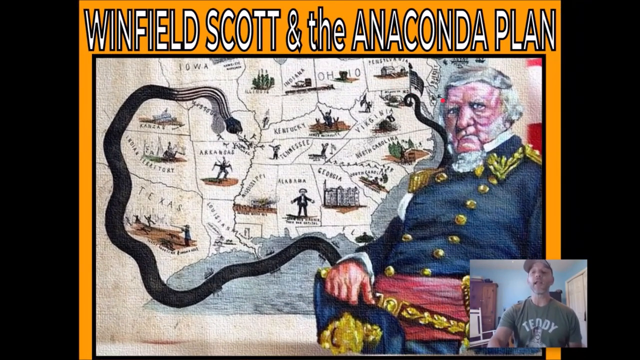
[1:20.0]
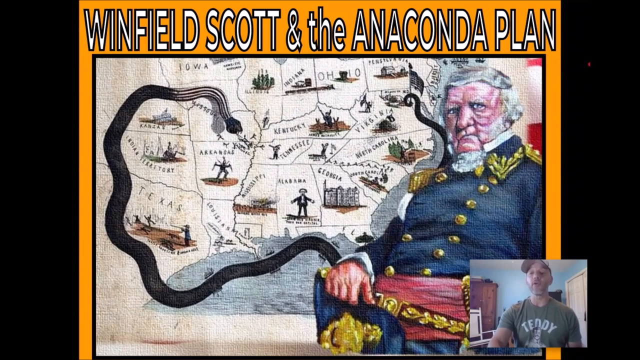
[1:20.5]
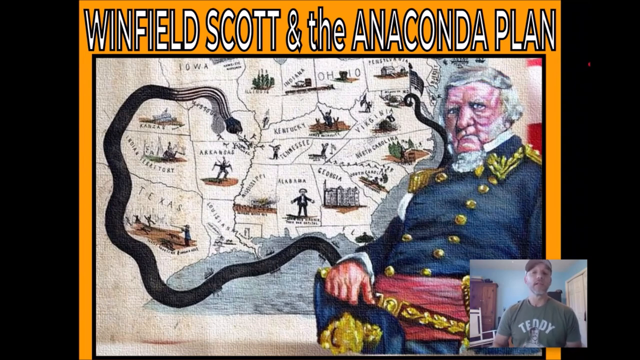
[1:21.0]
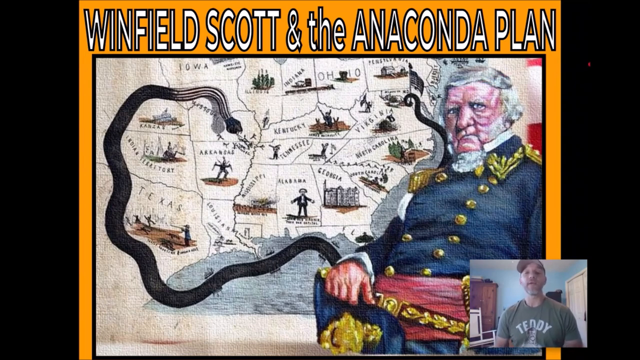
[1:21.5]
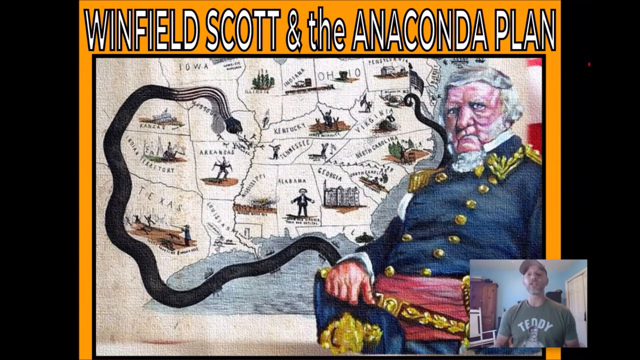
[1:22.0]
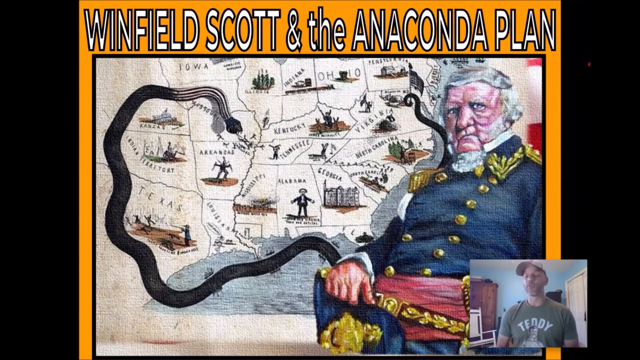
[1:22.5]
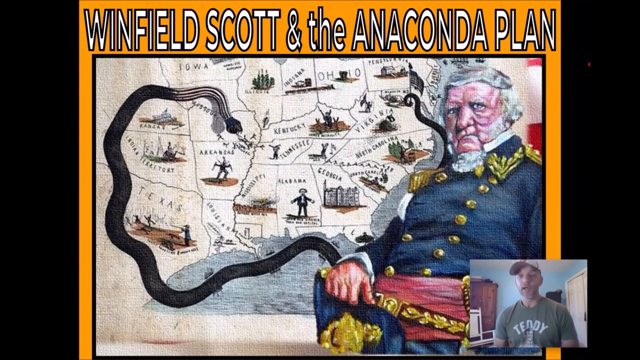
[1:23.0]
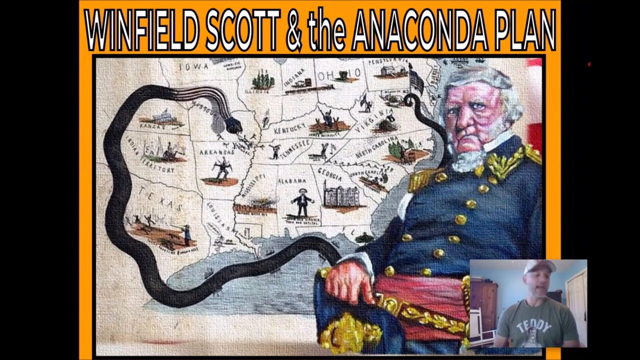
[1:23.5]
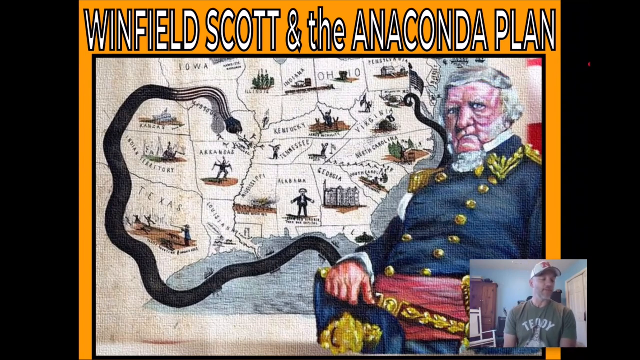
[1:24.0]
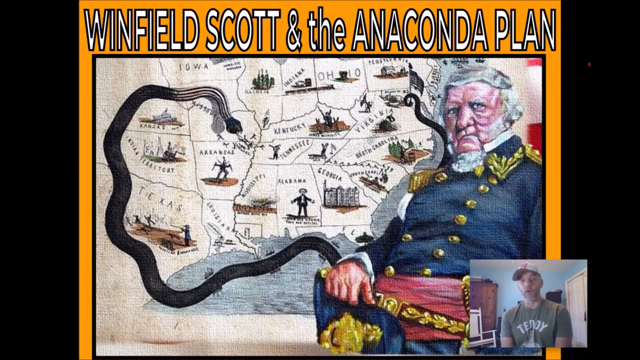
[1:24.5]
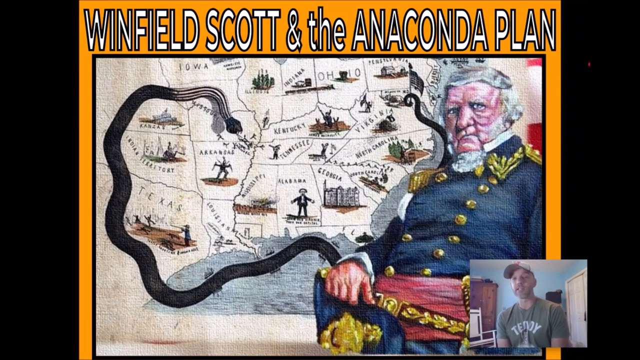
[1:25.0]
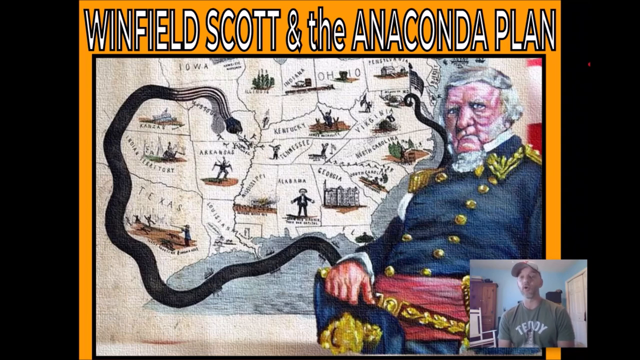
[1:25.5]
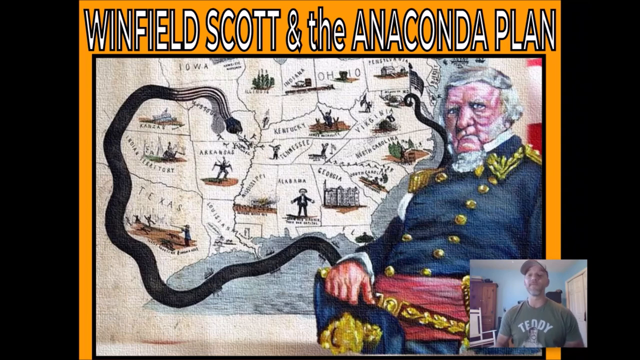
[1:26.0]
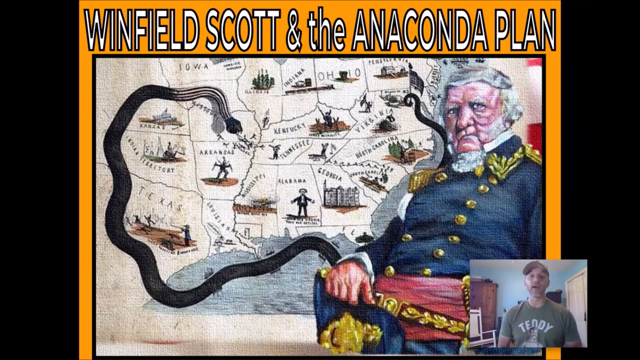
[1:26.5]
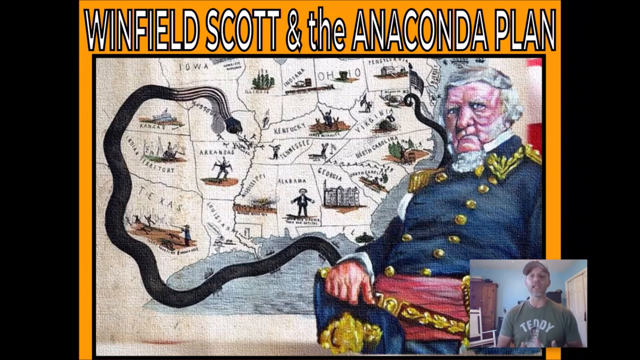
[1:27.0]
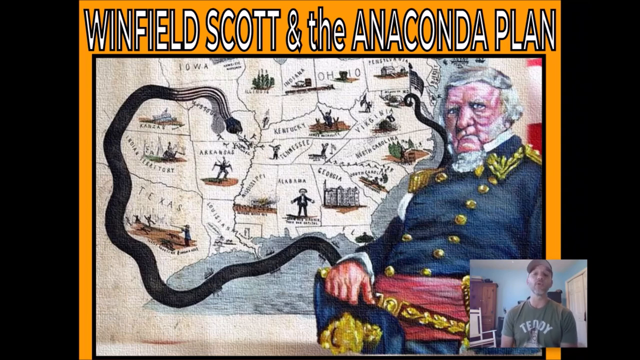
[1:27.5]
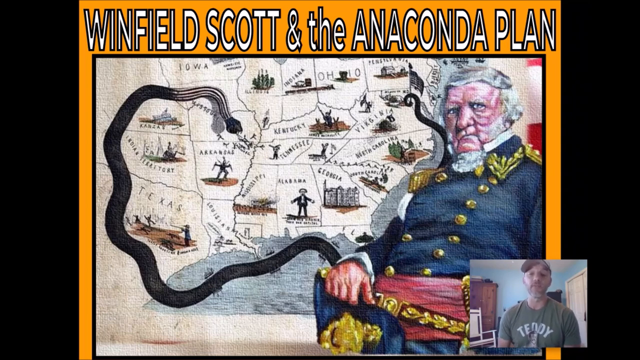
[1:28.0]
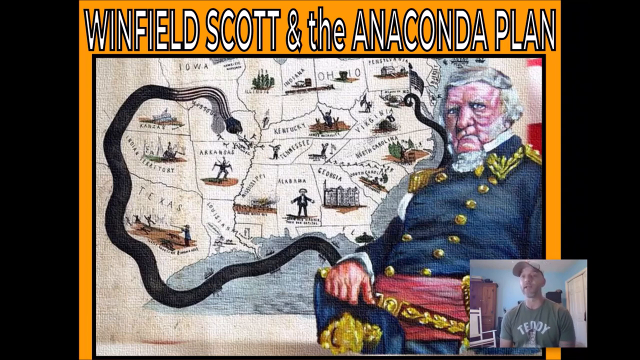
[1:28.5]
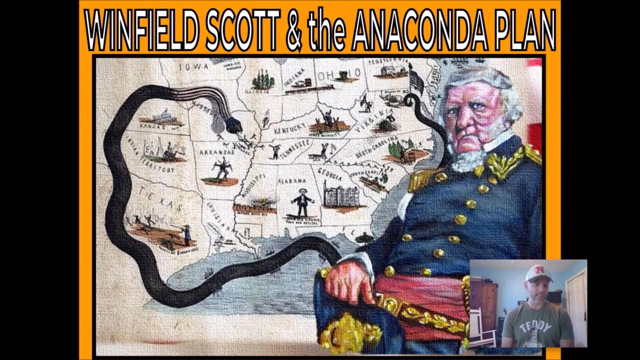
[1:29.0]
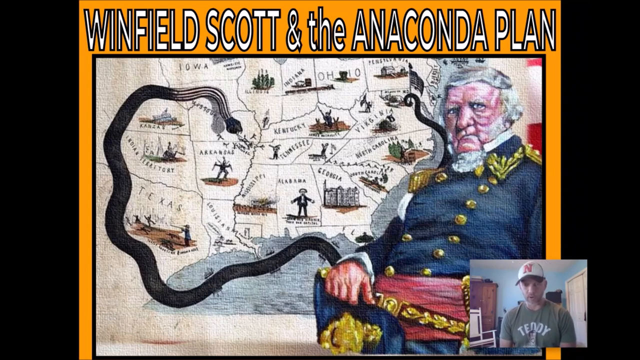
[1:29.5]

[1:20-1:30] The same picture labeled "Winfield Scott and the Anaconda Plan" remains on screen, showing a map with several states on it. Next to the states are a couple of symbols and logos, and a big black snake outlines some of the states. On the right side is the same elderly man dressed in soldier attire of the kind most common in older wars such as the Civil War and the American Revolutionary War. In the lower right-hand corner, the same man keeps speaking into the camera and making hand gestures.